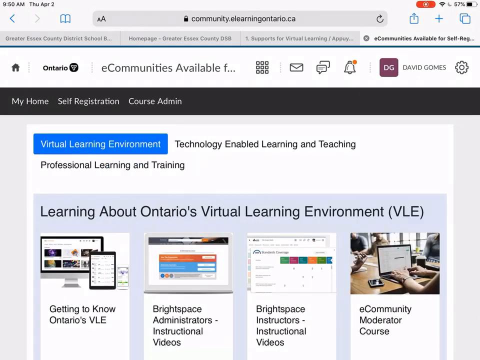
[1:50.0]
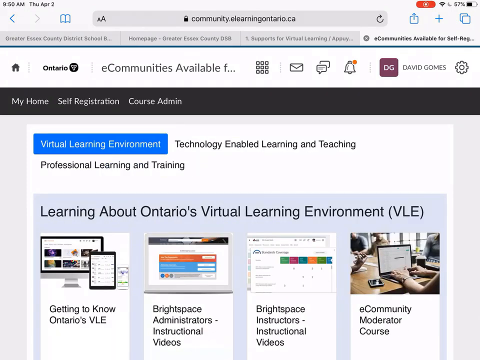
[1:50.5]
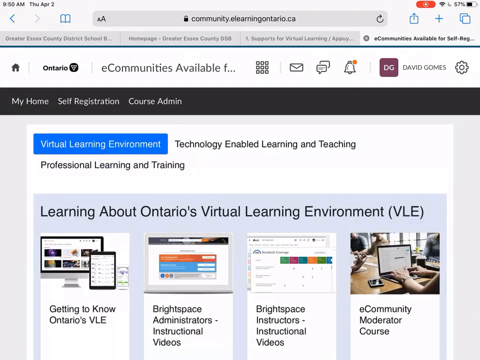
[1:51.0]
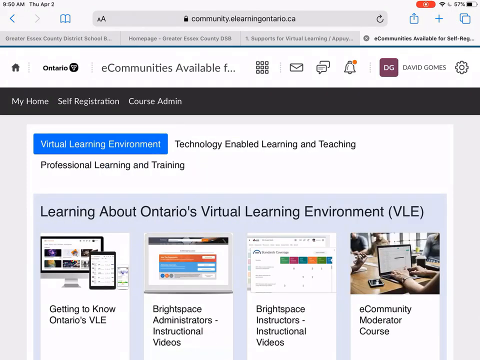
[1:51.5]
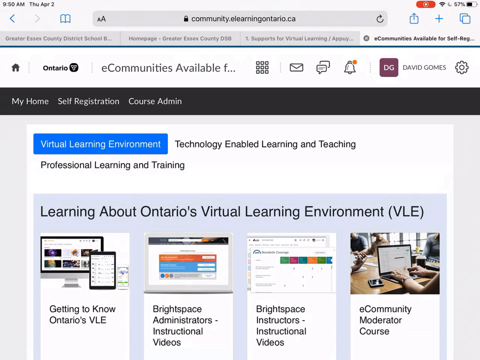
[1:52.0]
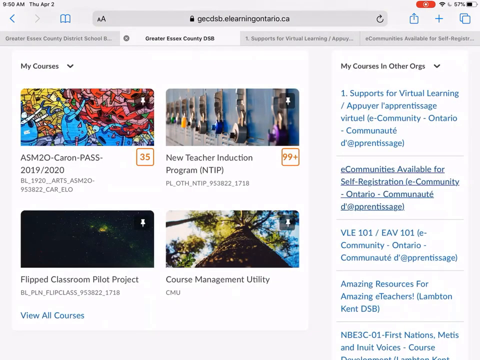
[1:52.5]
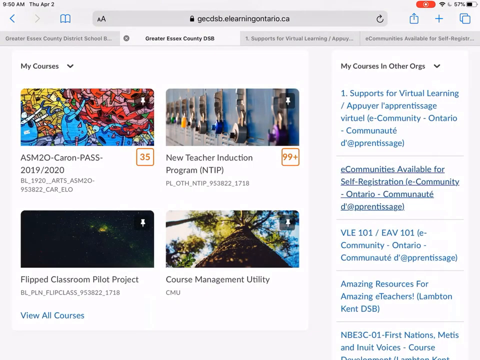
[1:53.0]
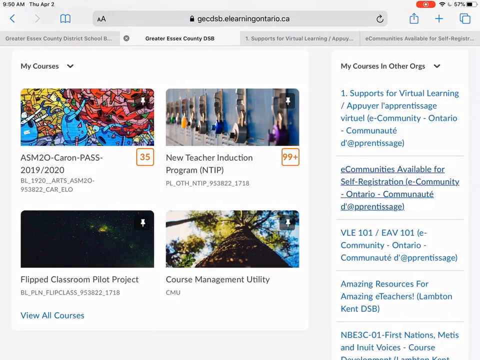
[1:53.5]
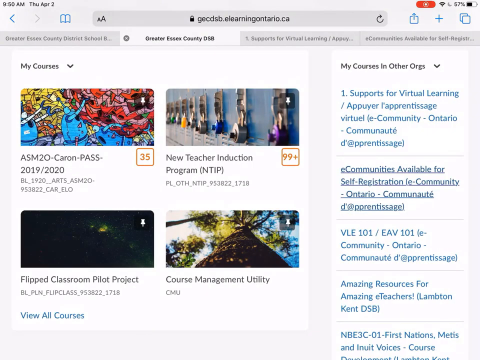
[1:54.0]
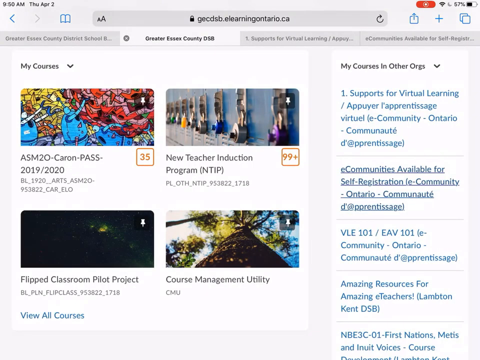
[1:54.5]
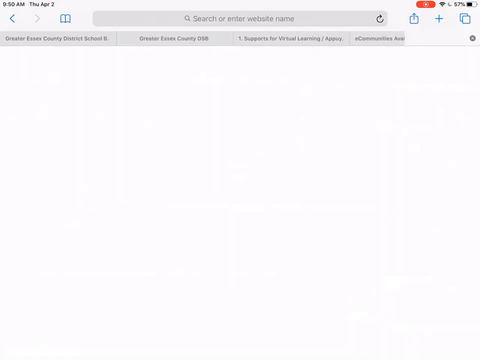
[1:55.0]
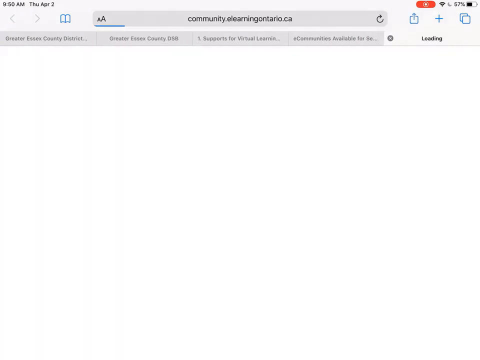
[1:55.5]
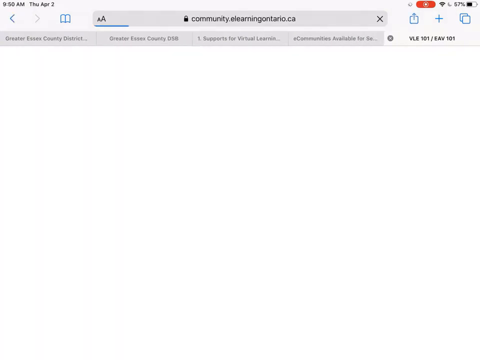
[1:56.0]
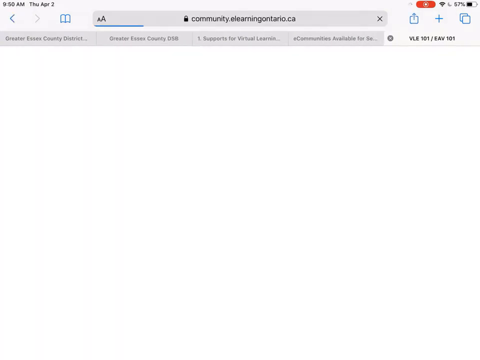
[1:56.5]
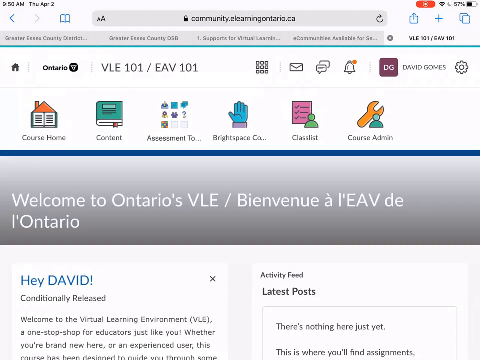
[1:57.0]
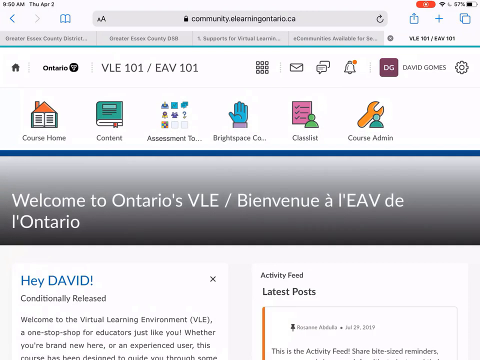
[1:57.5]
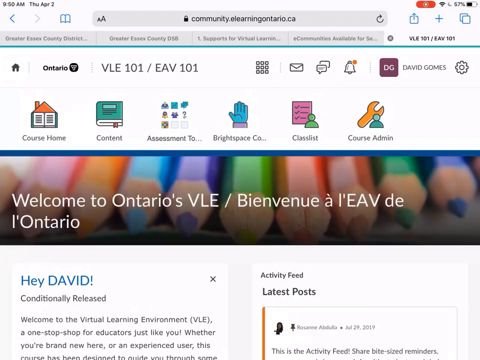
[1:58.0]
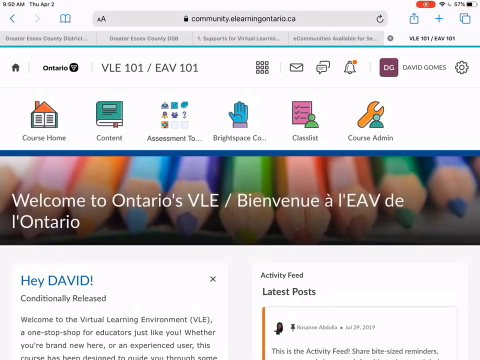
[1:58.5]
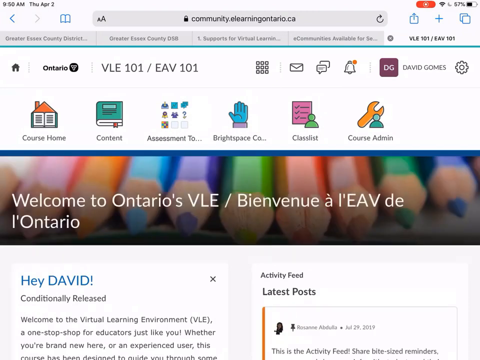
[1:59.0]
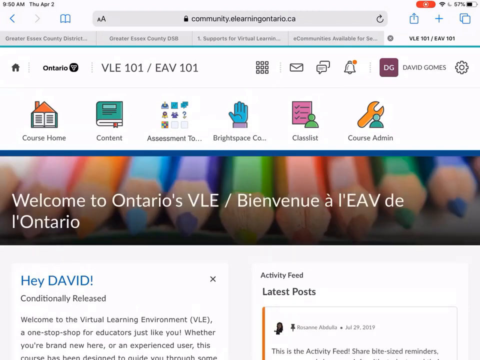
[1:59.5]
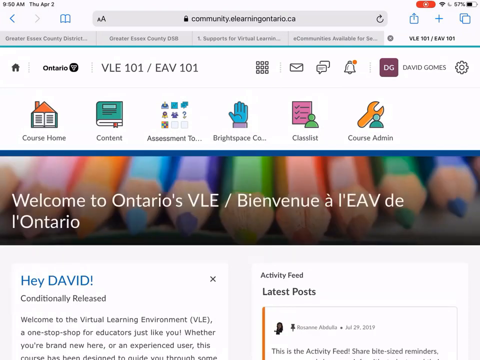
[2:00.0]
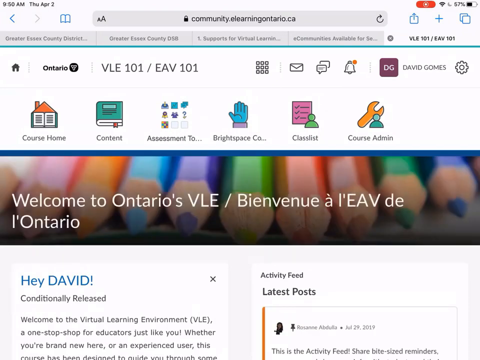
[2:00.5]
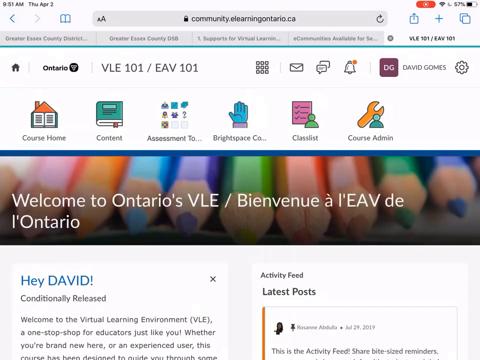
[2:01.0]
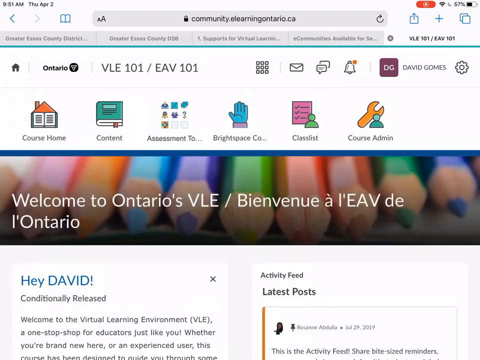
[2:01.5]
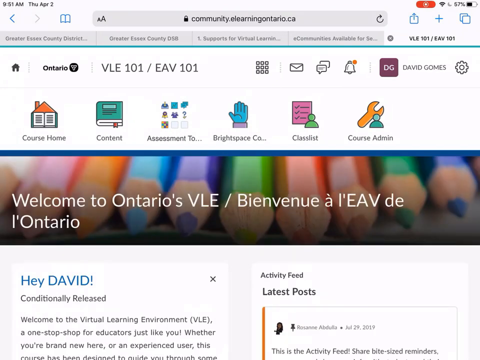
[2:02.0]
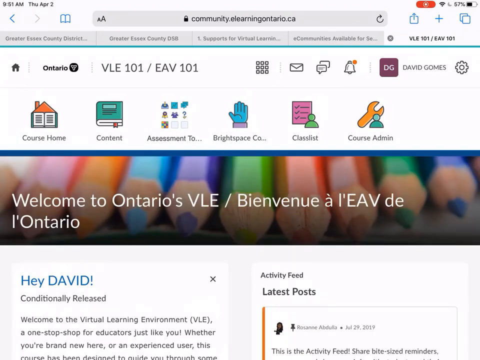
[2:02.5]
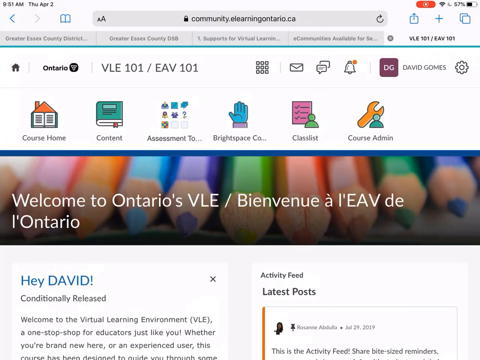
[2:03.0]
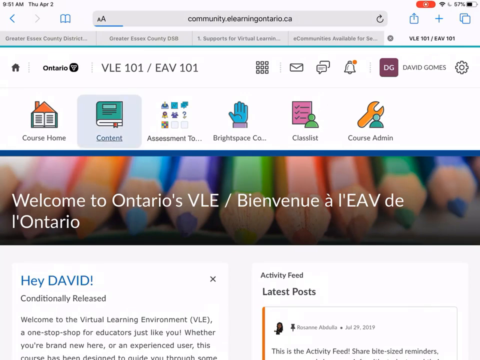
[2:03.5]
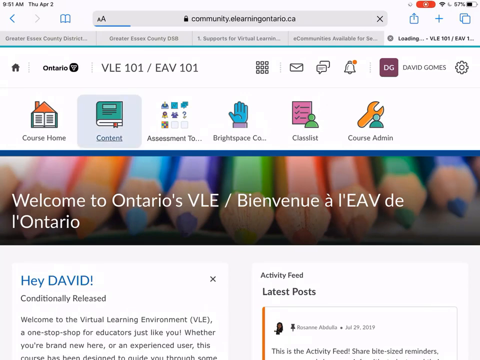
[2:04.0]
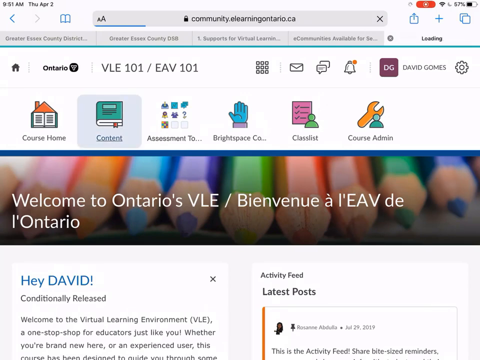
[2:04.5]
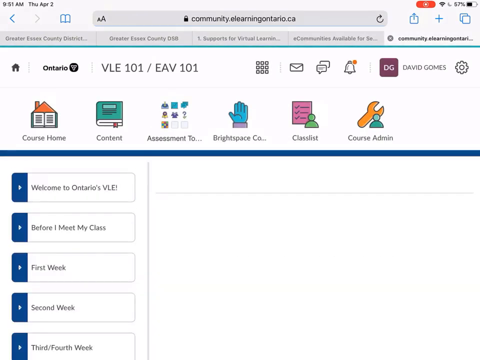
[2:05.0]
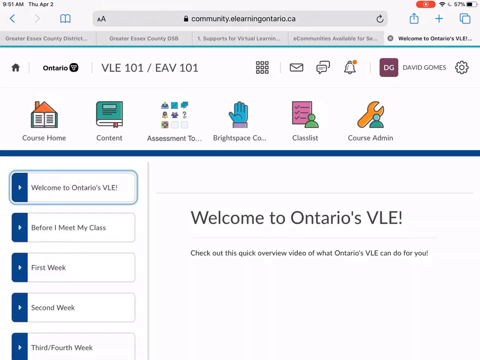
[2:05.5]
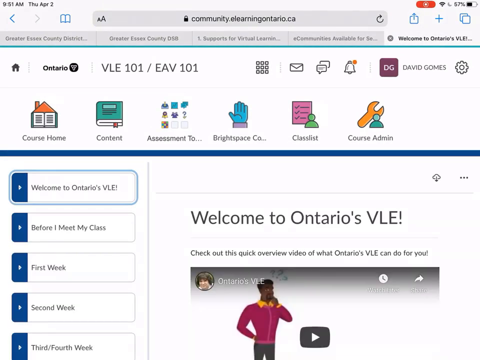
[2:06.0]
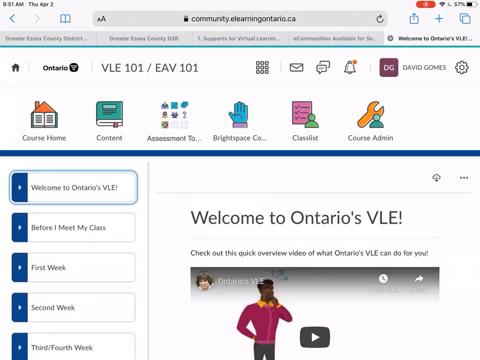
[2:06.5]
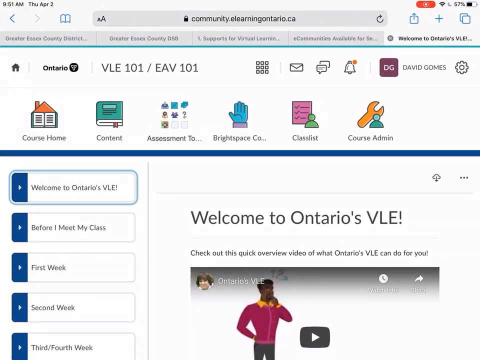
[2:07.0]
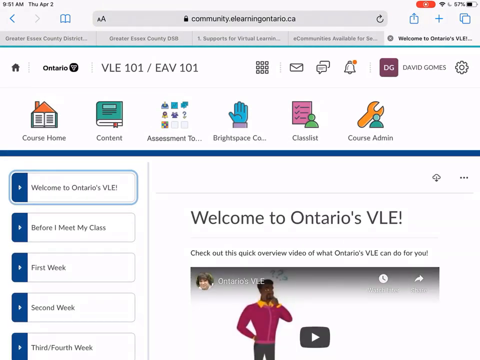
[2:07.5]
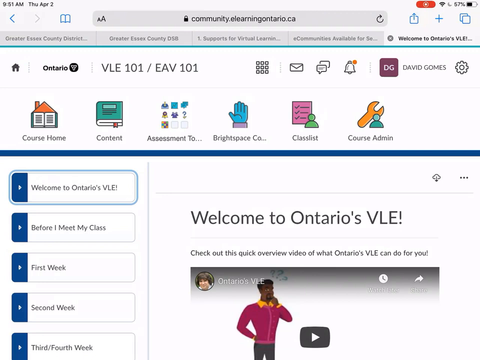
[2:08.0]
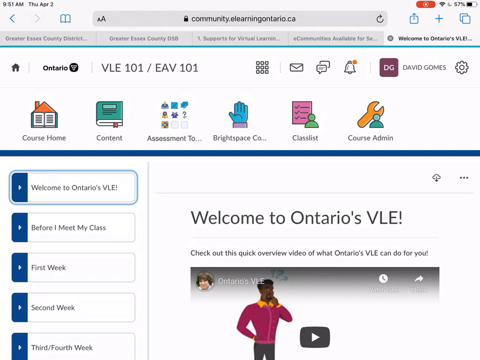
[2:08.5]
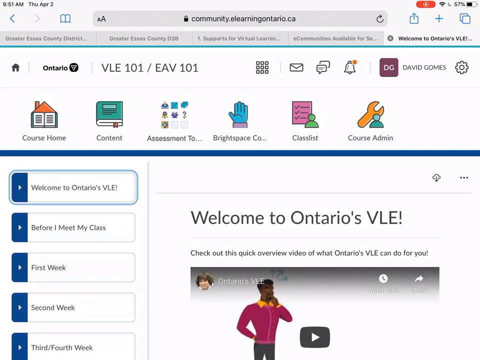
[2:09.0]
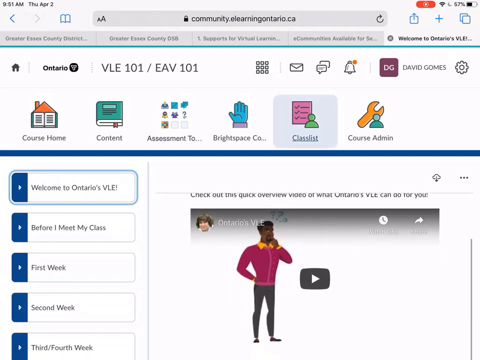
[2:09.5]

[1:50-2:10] A webpage reads "Virtual Learning Environment," "Technology-Enabled Learning and Teaching," and "Professional Learning and Training." Below that it reads "Learning about Ontario's Virtual Learning Environment, VLE," with four tabs beneath, each with an illustration above it: "Getting to Know Ontario's VLE," "Brightspace Administrators Instructional Videos," "Brightspace Instructors Instructional Videos," and "eCommunity Moderator Course." The scene changes to the next web page, reading "Getting to Know Ontario's VLE," which is highlighted. The person scrolls and goes briefly to "Professional Learning and Training," which has four tabs below it: "summer school in the VLE," "deep dive into e-learning," "engaging in a community of digital learners," and "how to improve student learning via the VLE." Next comes a webpage with an image of colored pencils in a line across the top, their sharpened tips pointing toward the viewer; underneath it reads "hey David" and "welcome to the virtual learning environment (VLE) a one-stop shop for educators just like you." The webpage then changes to one reading "welcome to Ontario's VLE" on the right, with four tabs arranged vertically on the left.